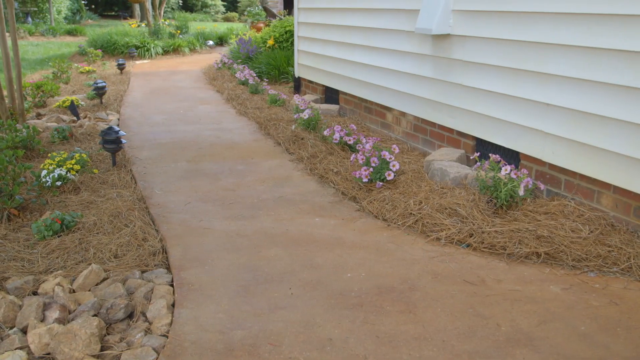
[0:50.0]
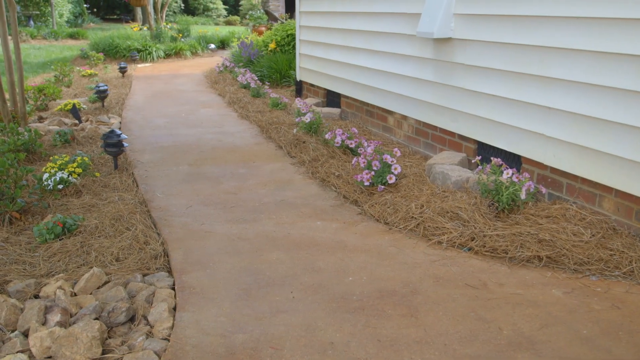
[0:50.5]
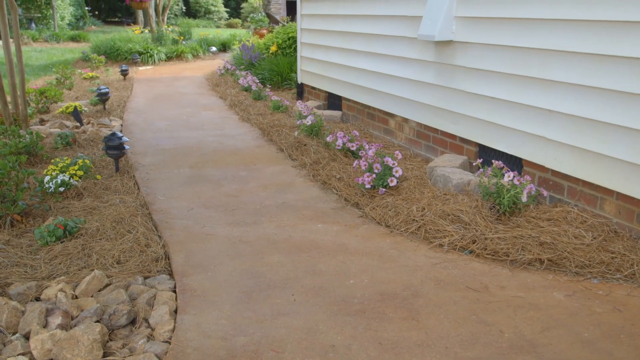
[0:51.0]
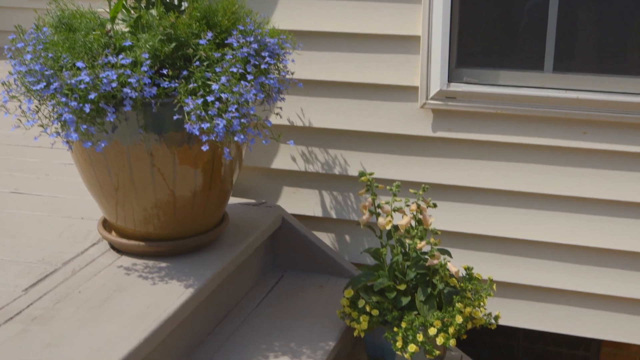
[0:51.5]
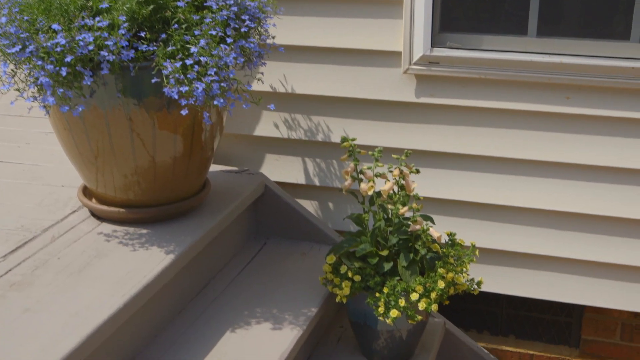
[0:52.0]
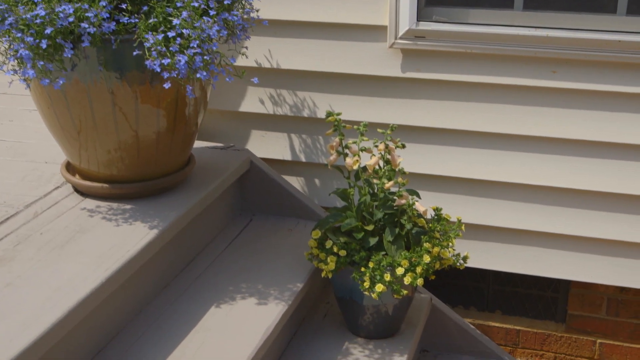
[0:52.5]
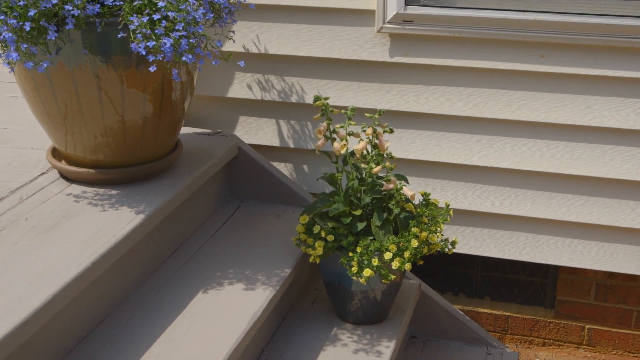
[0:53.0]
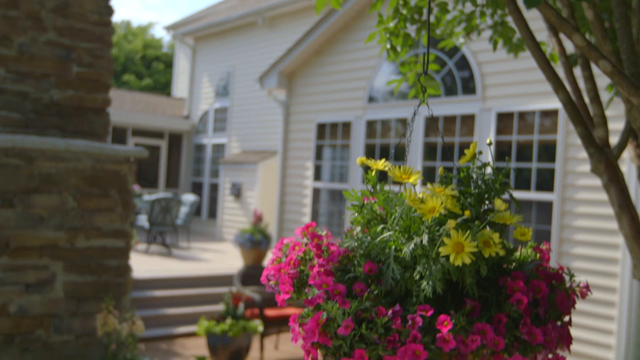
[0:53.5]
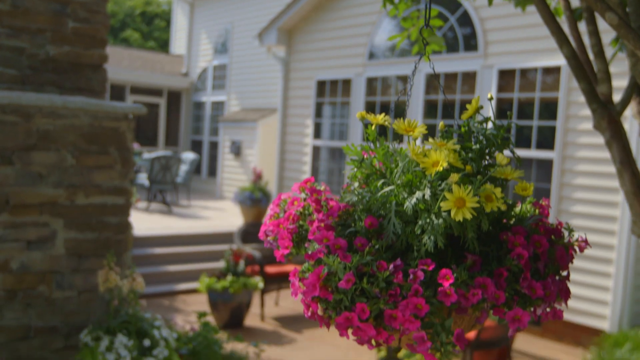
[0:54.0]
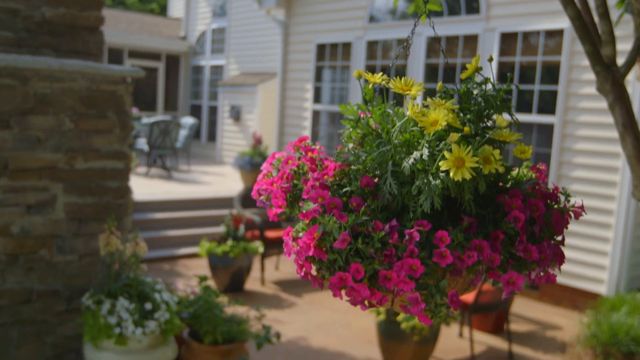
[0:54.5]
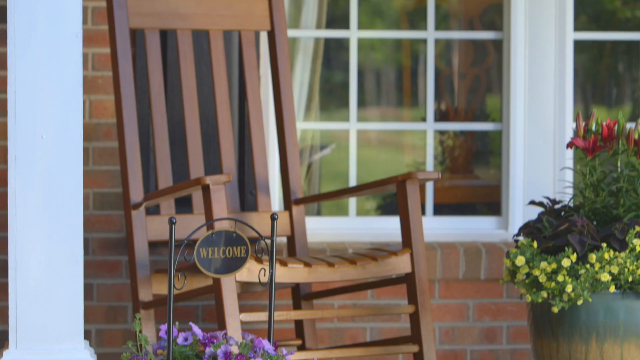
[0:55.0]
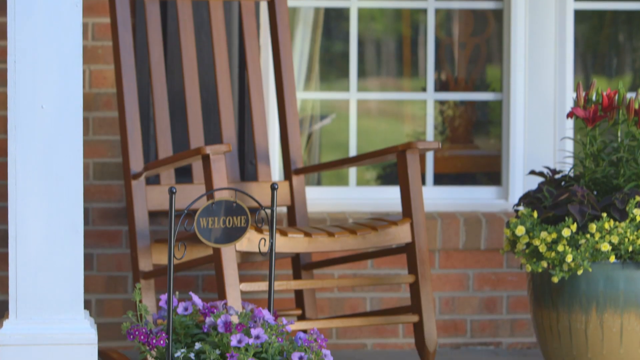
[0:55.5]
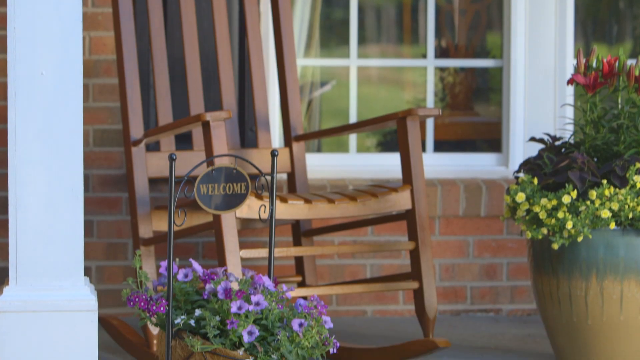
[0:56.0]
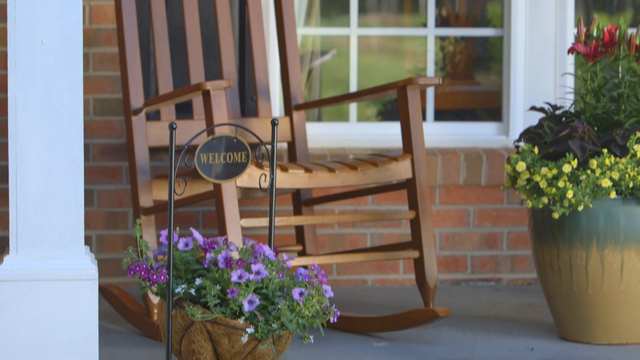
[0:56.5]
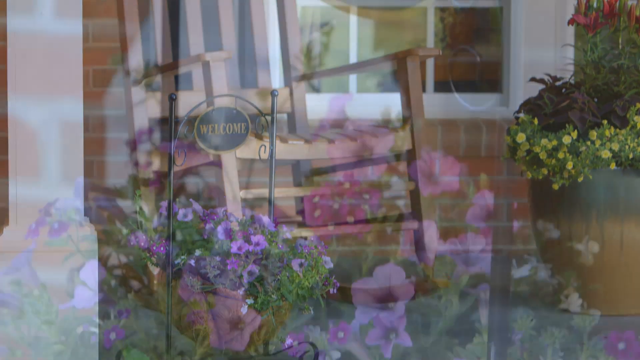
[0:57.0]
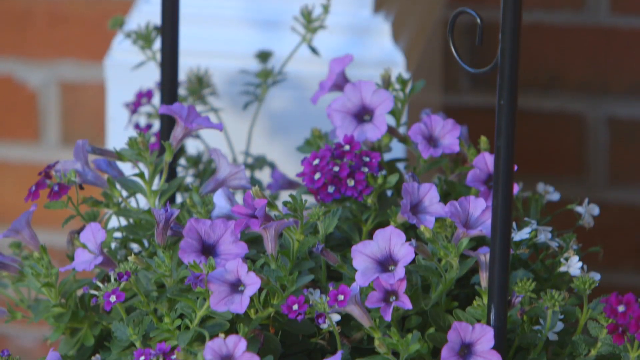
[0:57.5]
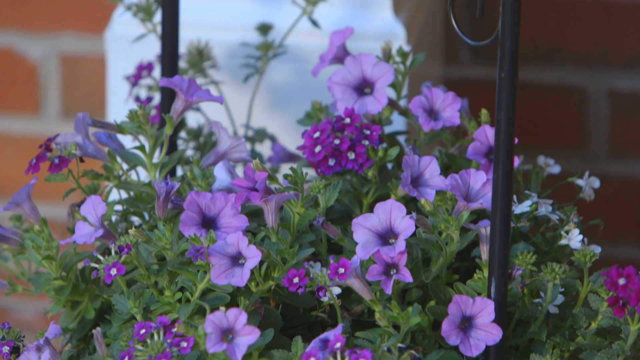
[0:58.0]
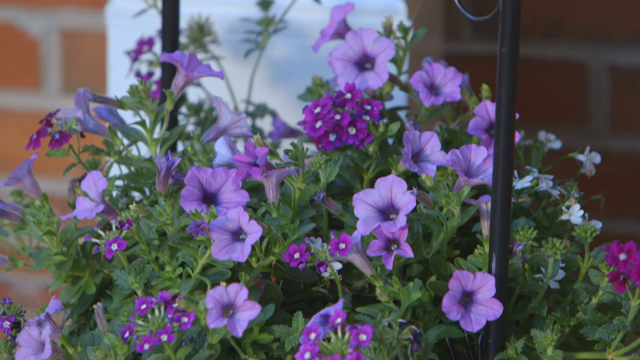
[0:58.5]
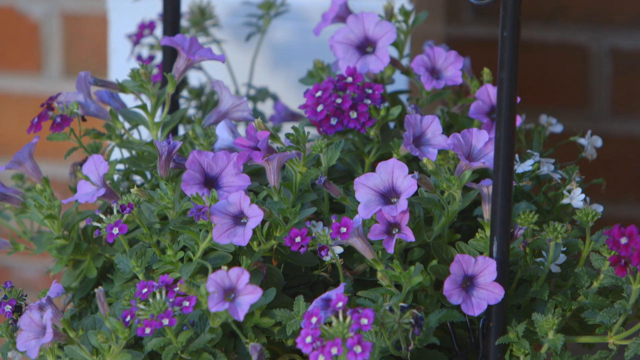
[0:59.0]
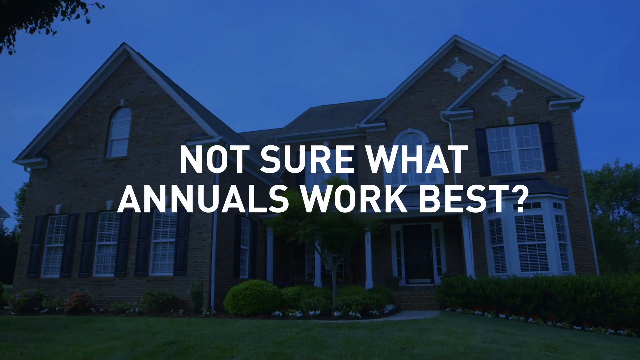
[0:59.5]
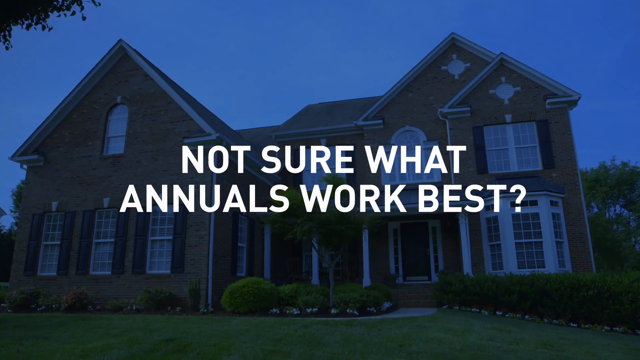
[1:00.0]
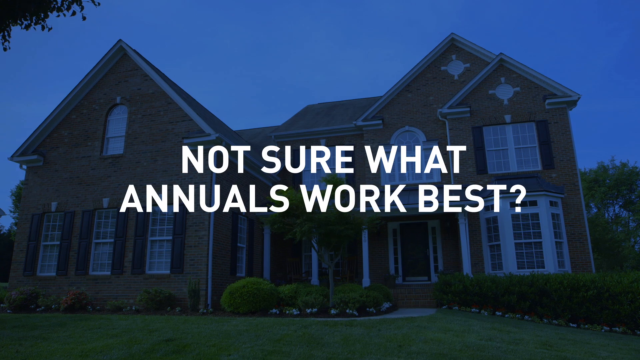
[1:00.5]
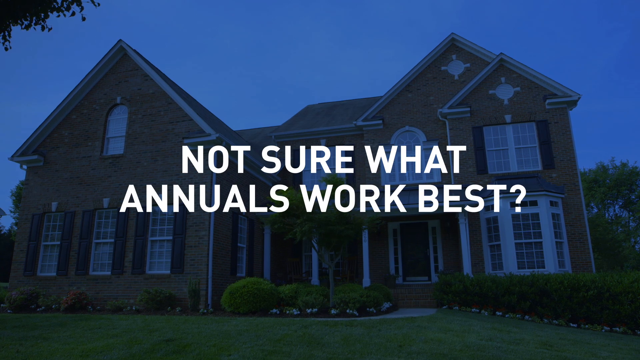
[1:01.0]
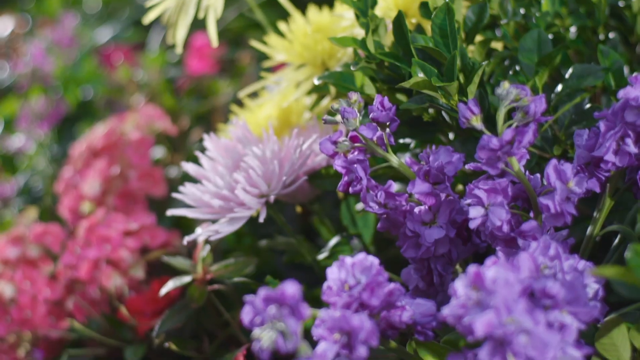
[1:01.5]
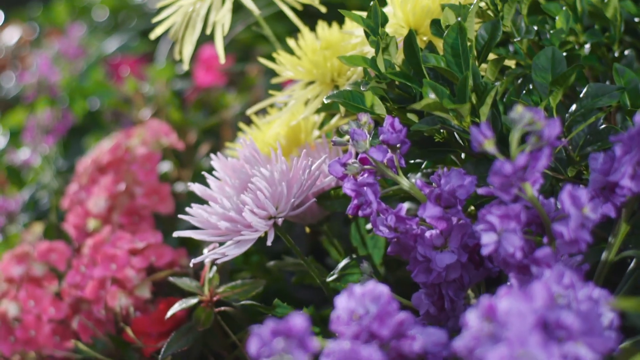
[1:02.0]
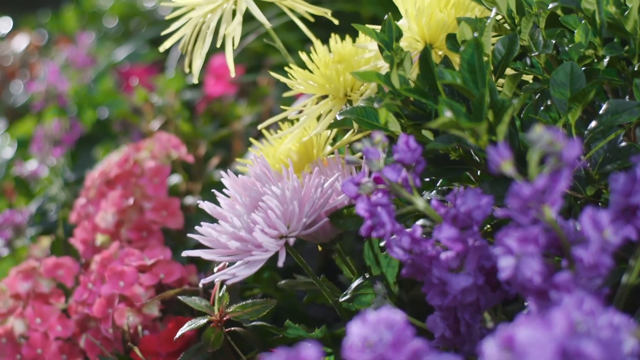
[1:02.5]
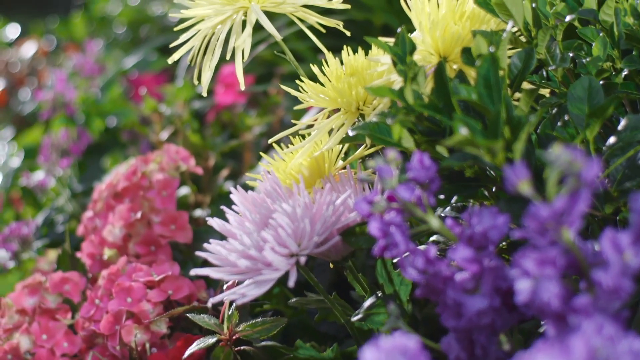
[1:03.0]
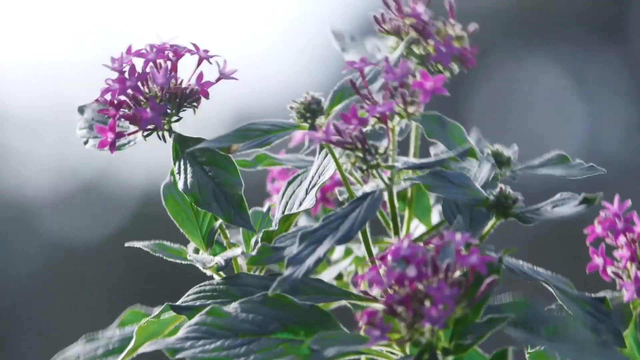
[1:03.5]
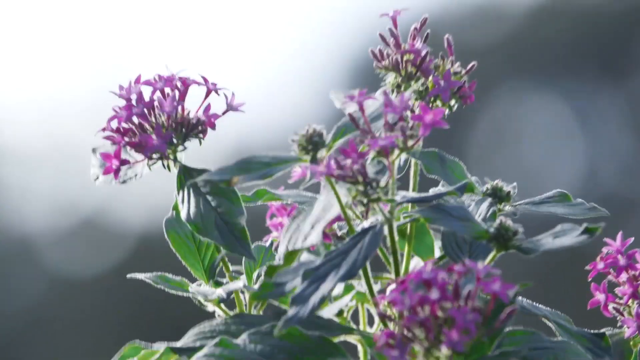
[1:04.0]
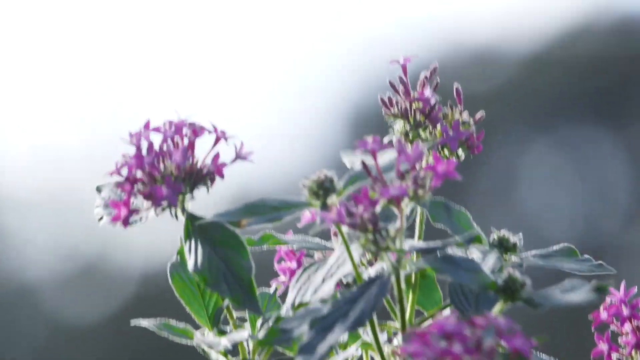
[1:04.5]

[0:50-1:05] The same walkway with flowers on either side is shown. The video then transitions to potted flowers on some outdoor steps in front of the house: one large pot is at the top landing, and a couple of steps down there is a smaller pot with yellow flowers. Some yellow and pink flowers are hanging from a tree. A rocking chair on the porch has some purple flowers in front of it and some yellow and red ones to the right side. The scene transitions to a close-up of purple flowers, panning from top to bottom over a couple of different types: some smaller and dark purple, others a little larger and lighter purple. Another slide then shows the same house from the beginning with kind of a blue transparent overlay and a question written in the center: "Not sure what annuals work best?" After a few seconds, the video transitions to more close-ups of purple, yellow and pink flowers.